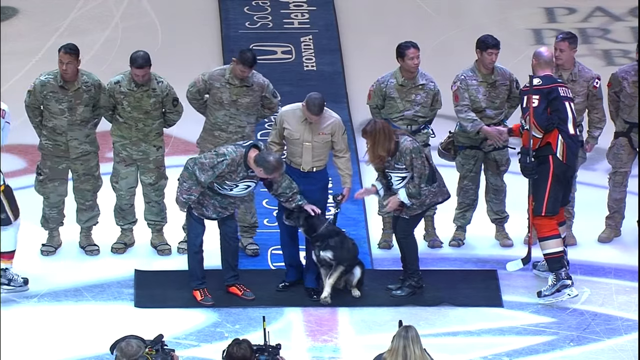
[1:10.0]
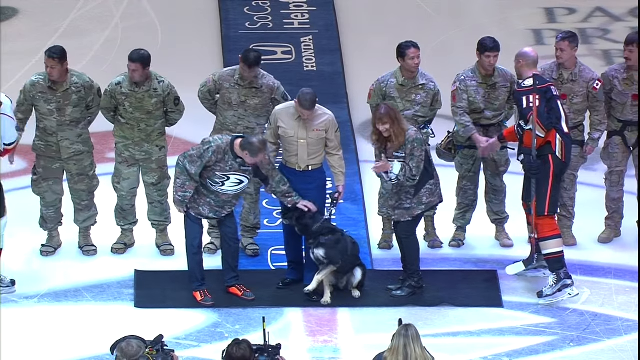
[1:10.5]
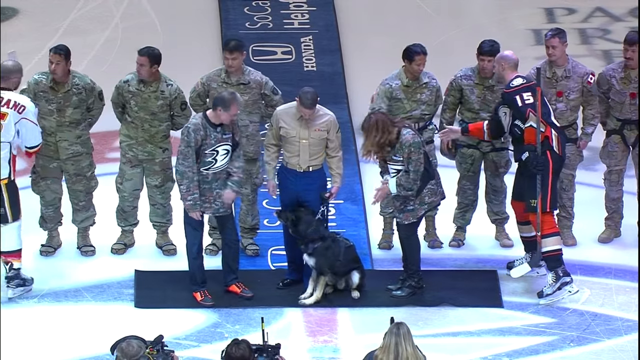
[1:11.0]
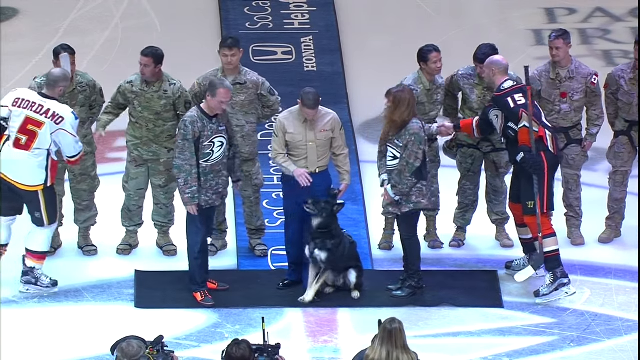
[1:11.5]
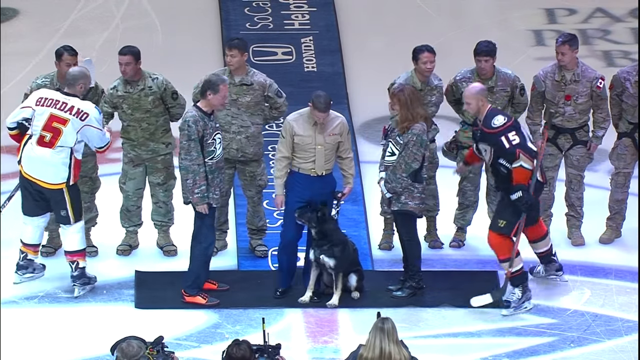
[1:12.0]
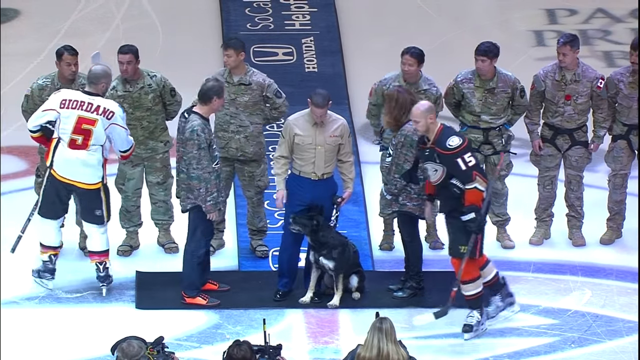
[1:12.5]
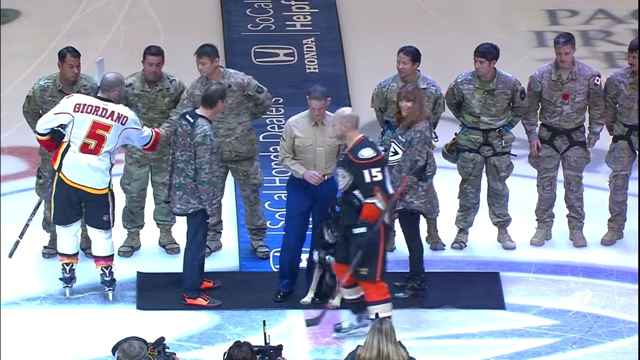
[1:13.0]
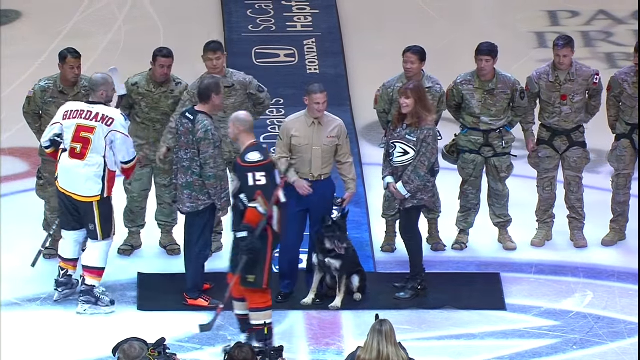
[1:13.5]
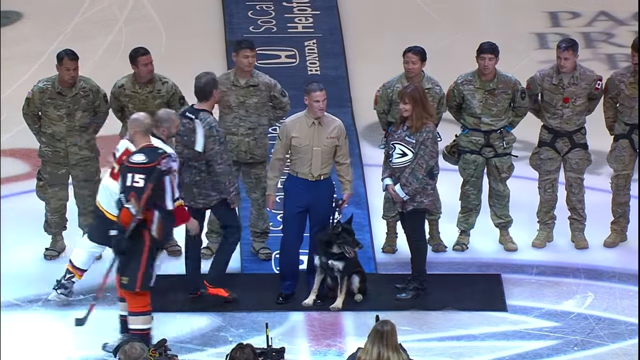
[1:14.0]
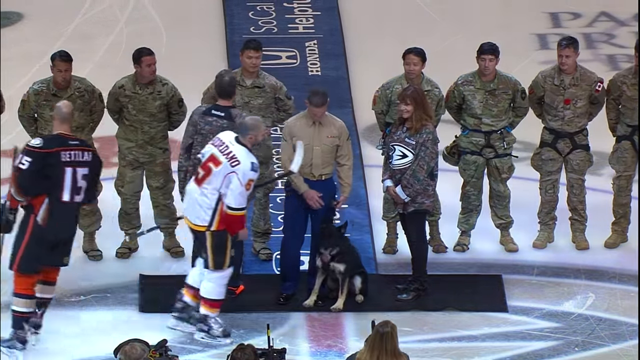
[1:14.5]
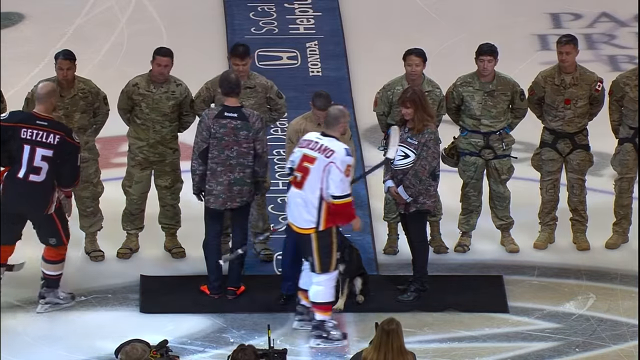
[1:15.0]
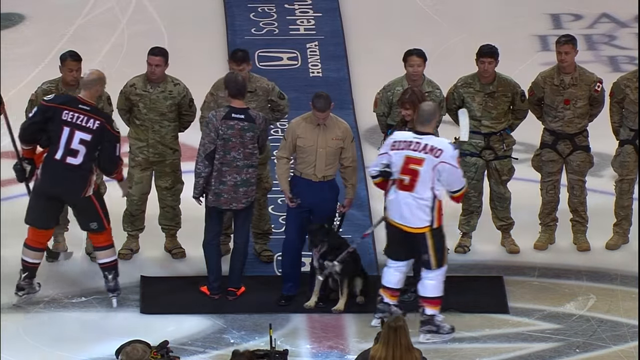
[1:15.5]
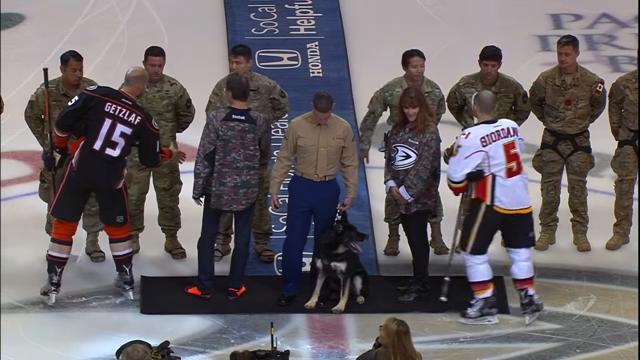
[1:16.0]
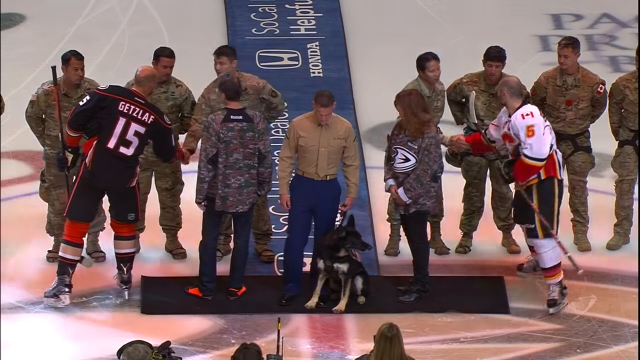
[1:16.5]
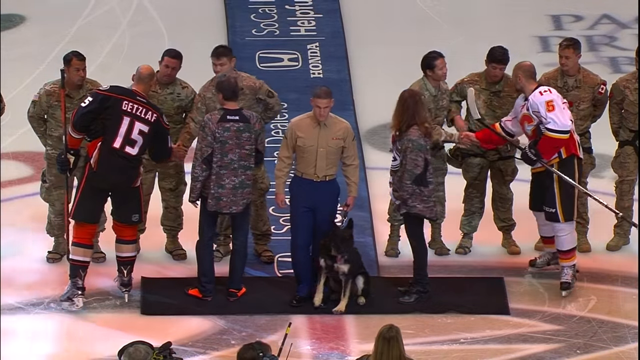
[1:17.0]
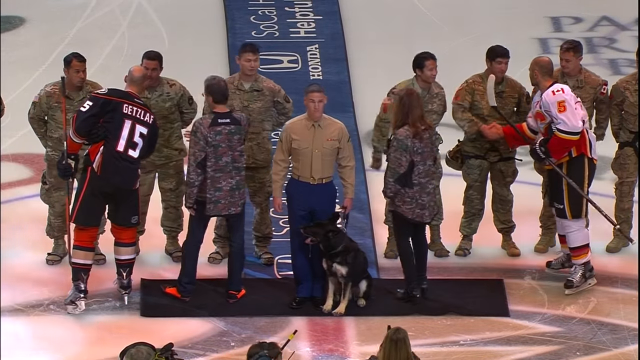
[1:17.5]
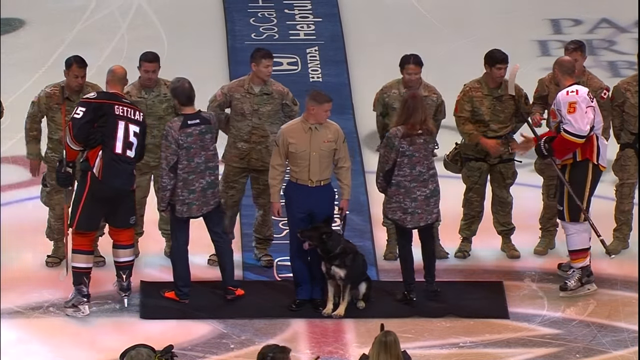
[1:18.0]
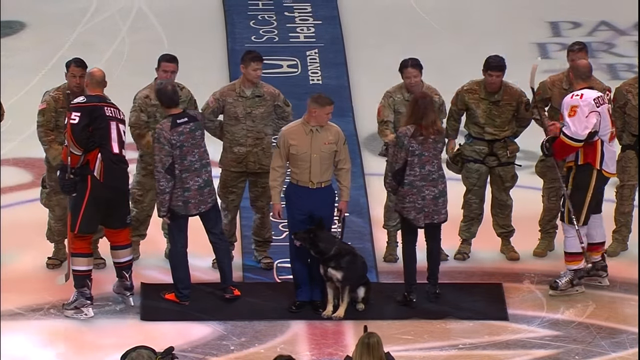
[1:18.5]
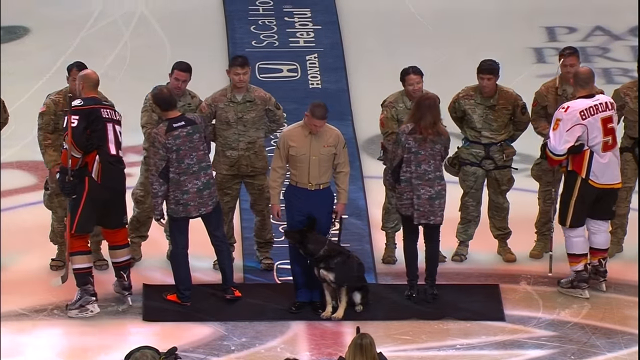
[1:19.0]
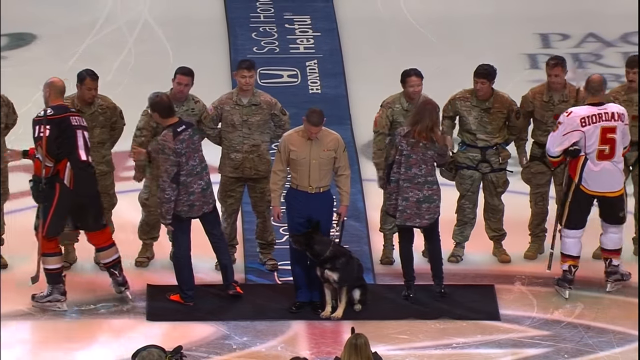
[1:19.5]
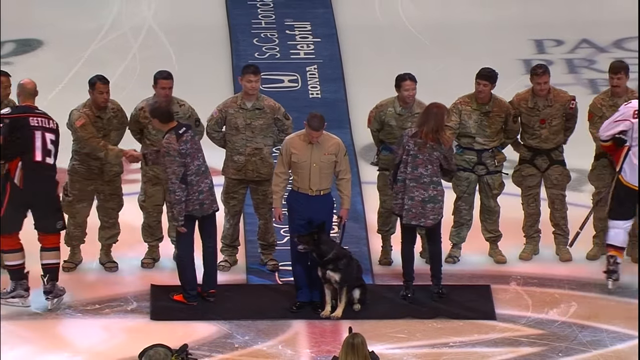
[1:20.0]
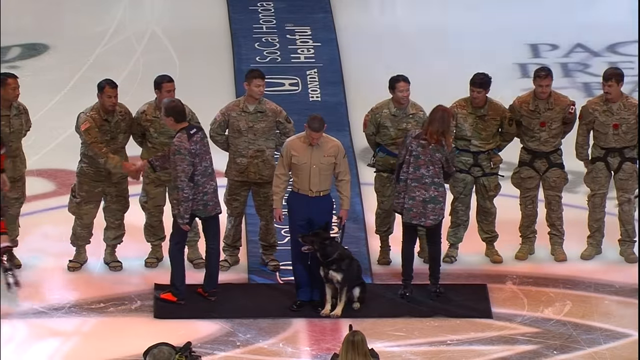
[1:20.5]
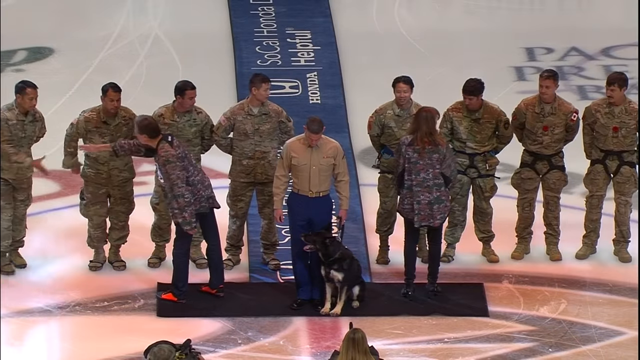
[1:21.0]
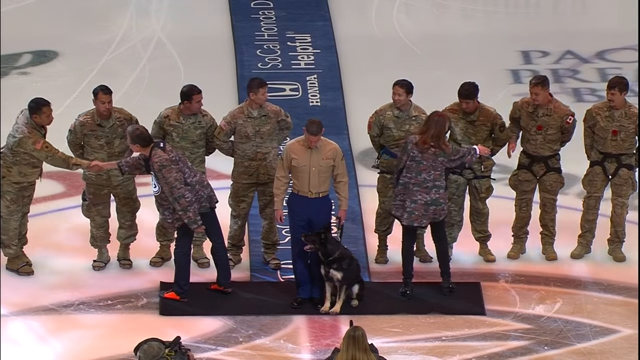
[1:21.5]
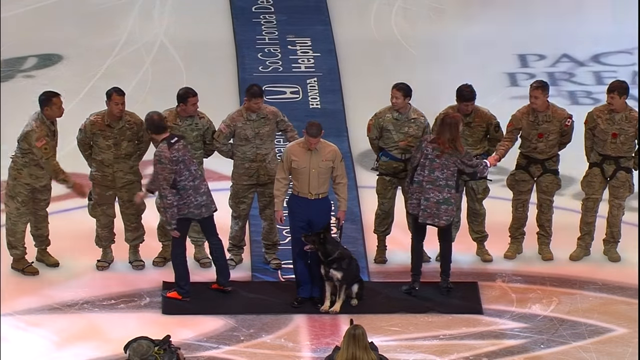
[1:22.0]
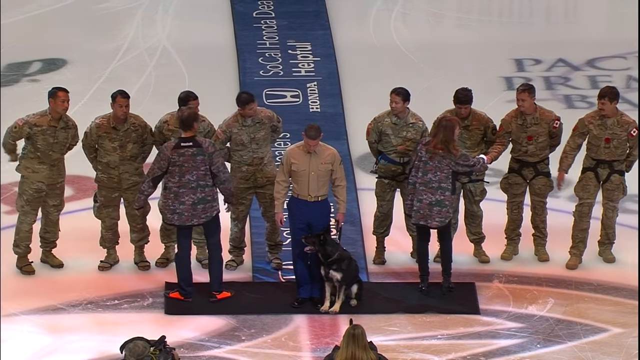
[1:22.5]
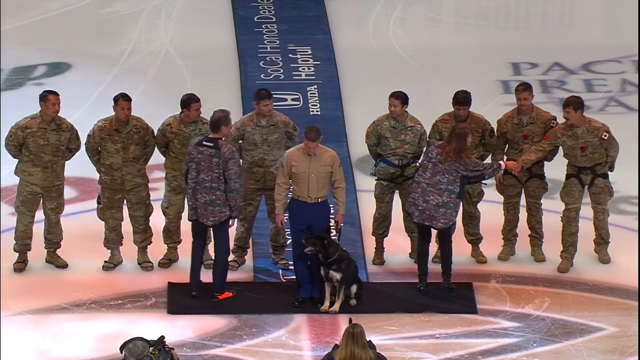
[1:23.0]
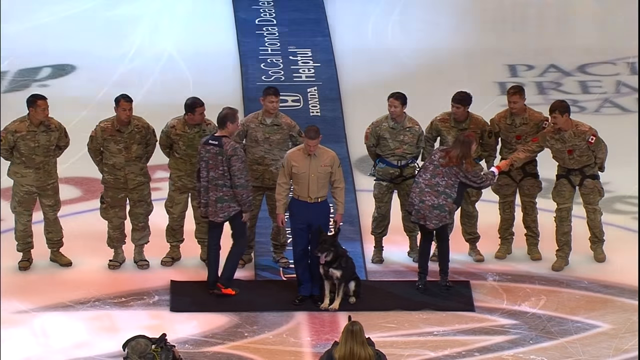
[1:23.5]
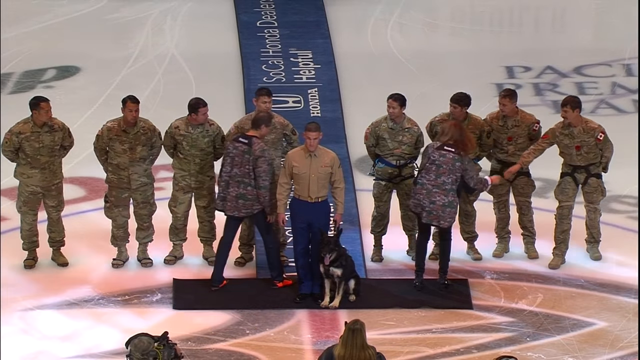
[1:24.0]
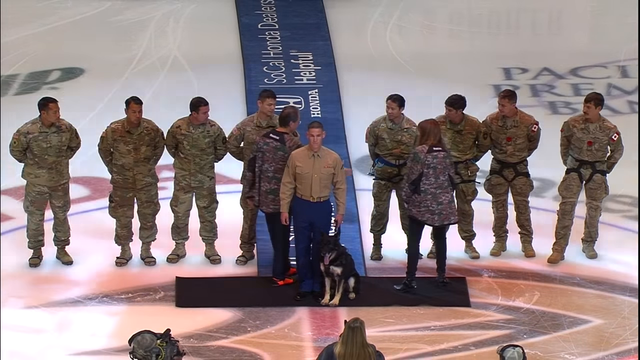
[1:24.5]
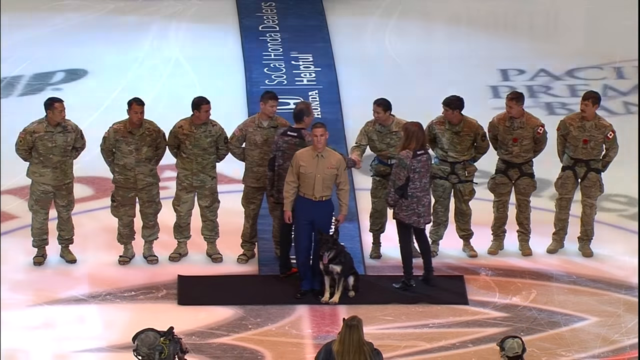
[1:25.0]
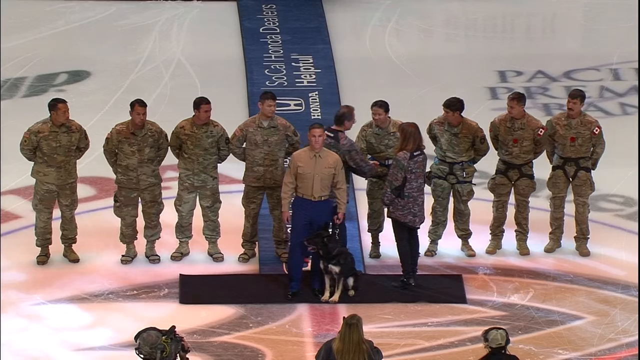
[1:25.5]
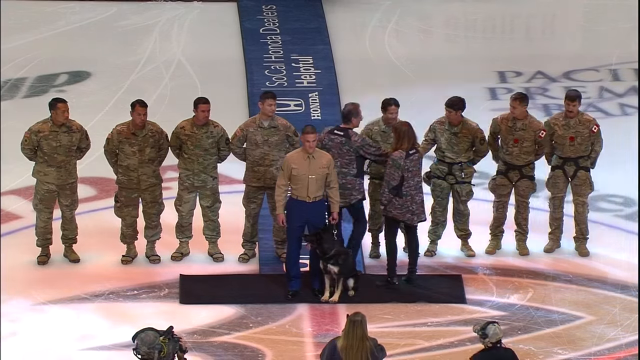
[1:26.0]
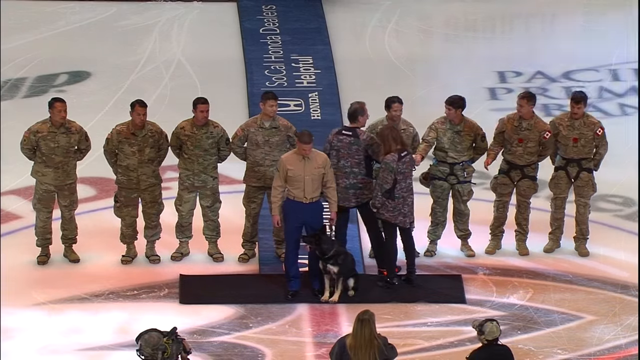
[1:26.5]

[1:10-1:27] A group of people is in a gymnasium. Some people in the background are fully clad in US Army clothing, while others wear only army-colored shirts. In the very center is a man with a dog sitting right in front of him; the dog is large, like a German Shepherd. The man wears a long-sleeved tan shirt and dark blue pants. Two hockey players are also there, one in a white and red uniform and the other in a black and orange uniform. Everyone is looking at each other, speaking and shaking hands. The hockey players glide around shaking hands with everyone and then suddenly glide off the sides of the frame. The camera slowly zooms out and the video ends.